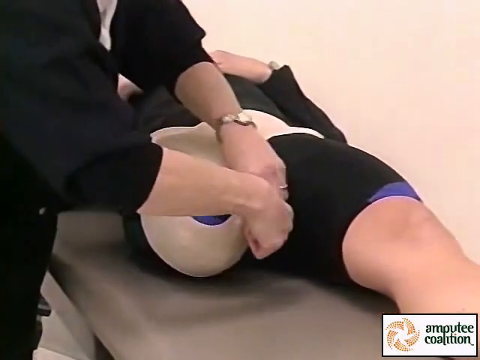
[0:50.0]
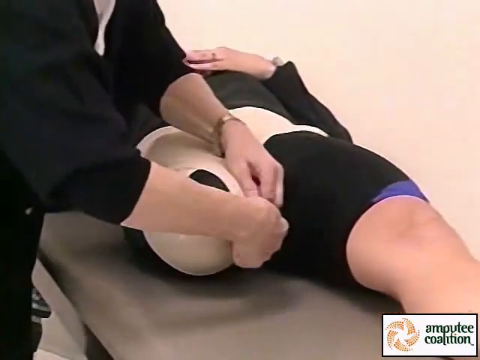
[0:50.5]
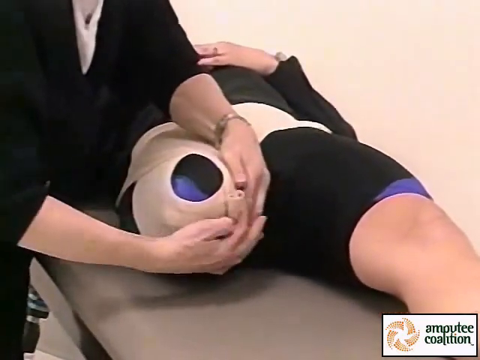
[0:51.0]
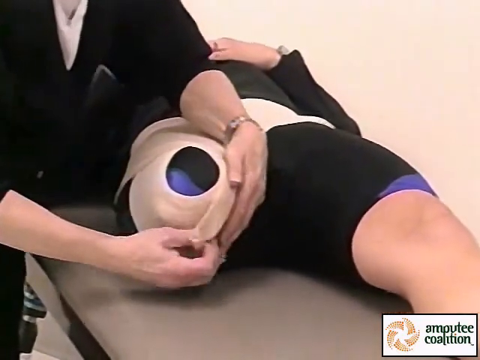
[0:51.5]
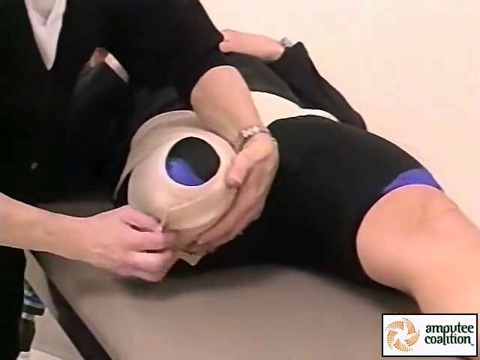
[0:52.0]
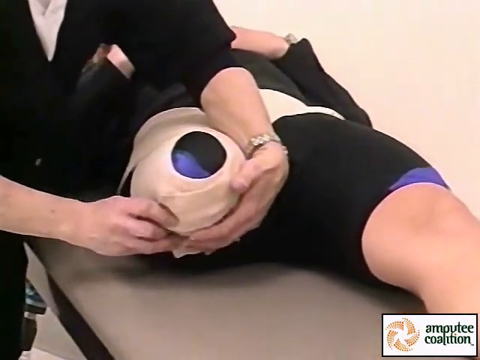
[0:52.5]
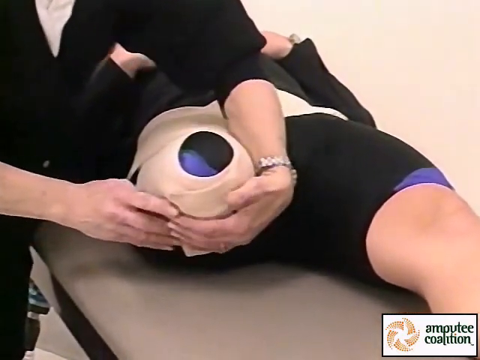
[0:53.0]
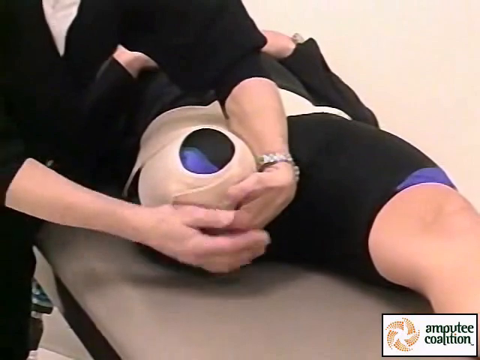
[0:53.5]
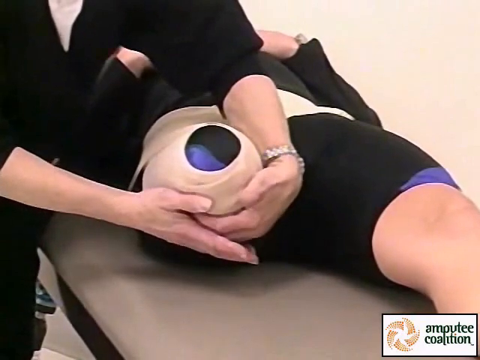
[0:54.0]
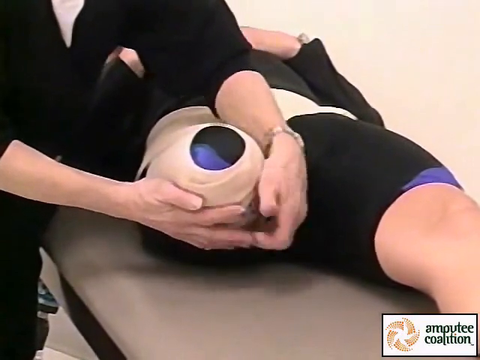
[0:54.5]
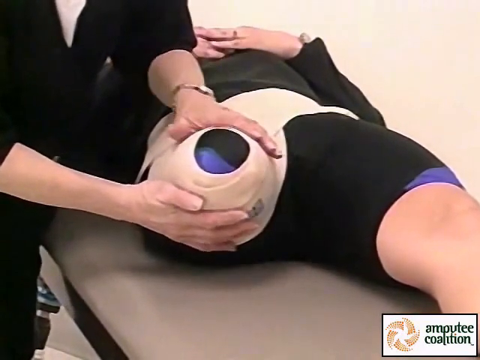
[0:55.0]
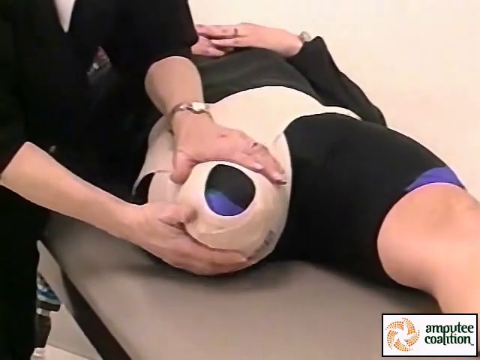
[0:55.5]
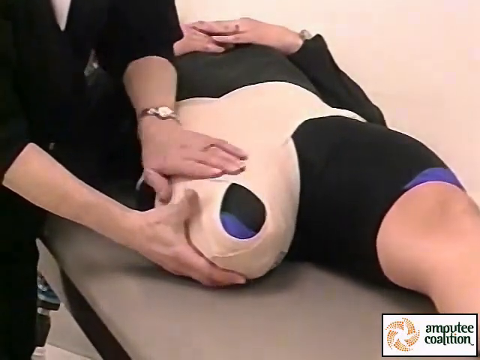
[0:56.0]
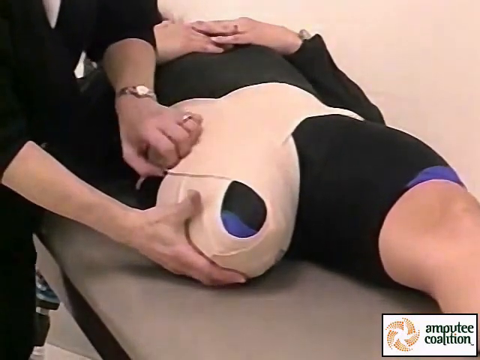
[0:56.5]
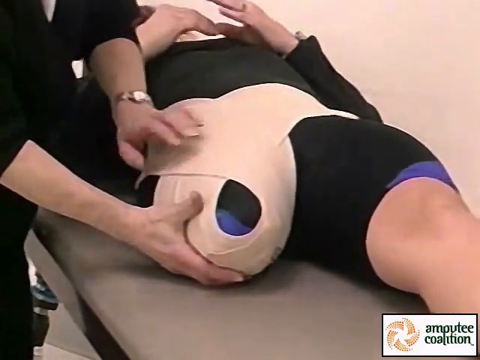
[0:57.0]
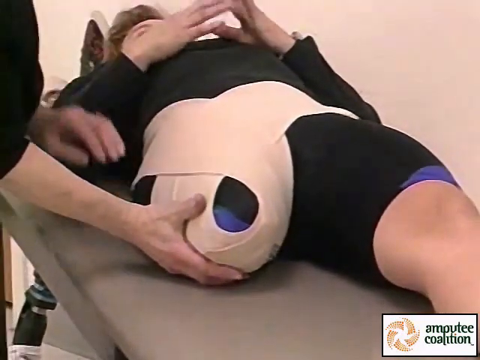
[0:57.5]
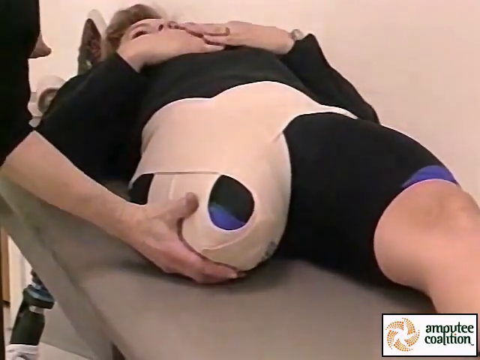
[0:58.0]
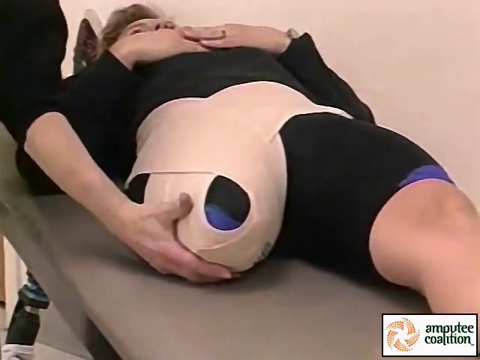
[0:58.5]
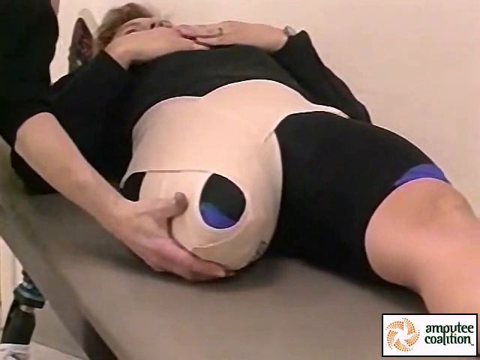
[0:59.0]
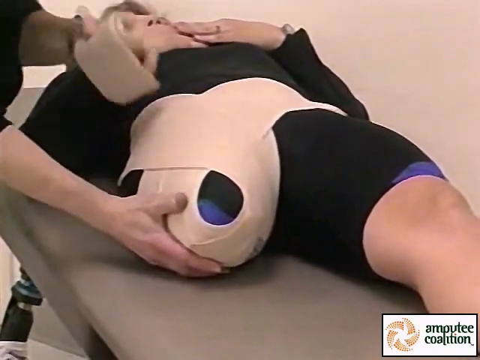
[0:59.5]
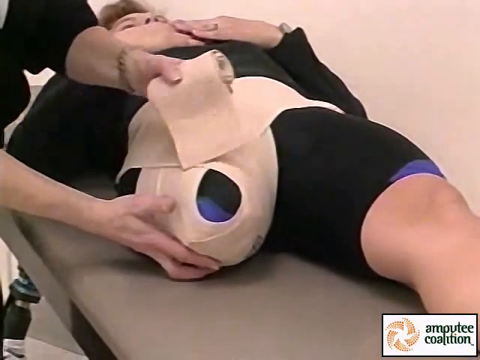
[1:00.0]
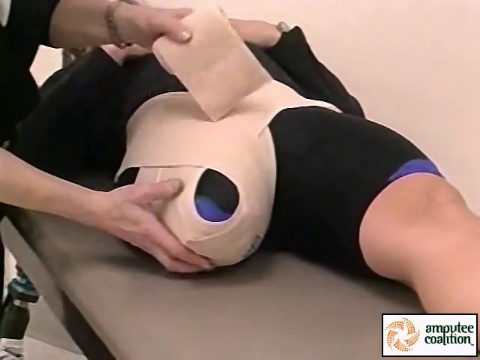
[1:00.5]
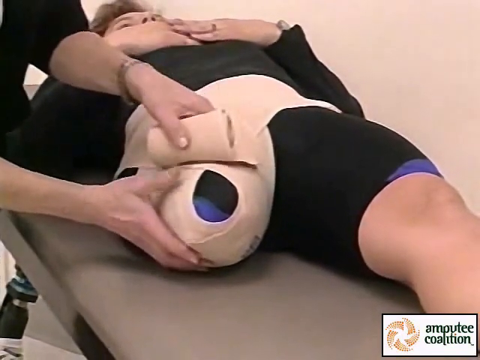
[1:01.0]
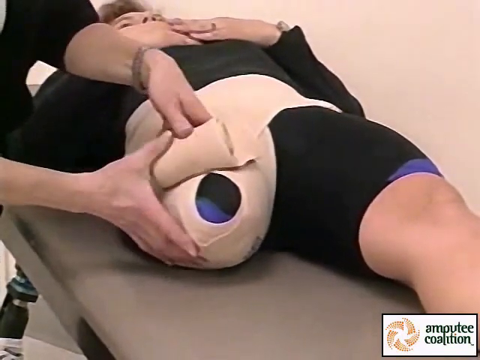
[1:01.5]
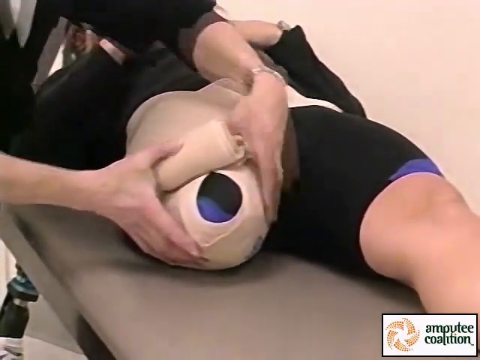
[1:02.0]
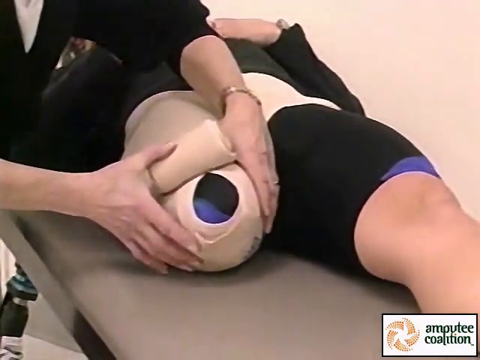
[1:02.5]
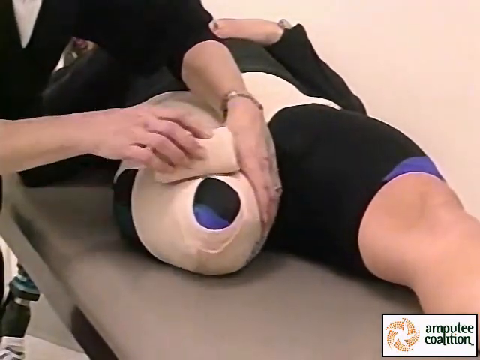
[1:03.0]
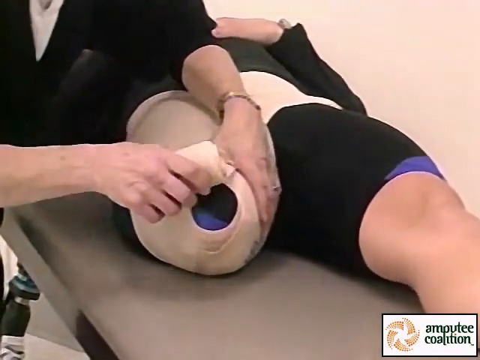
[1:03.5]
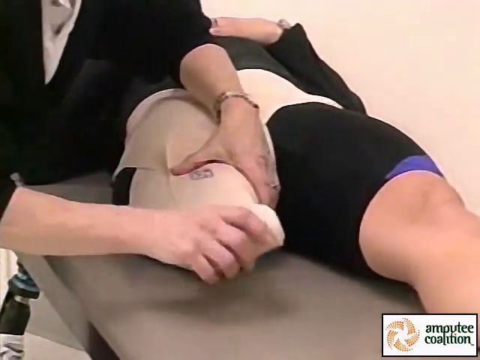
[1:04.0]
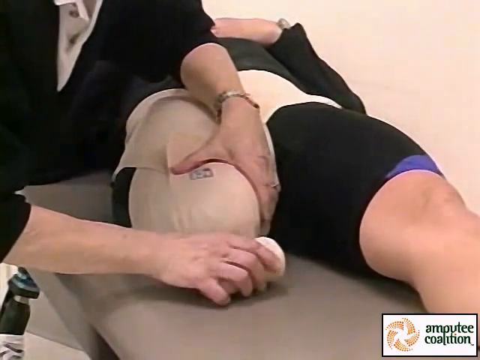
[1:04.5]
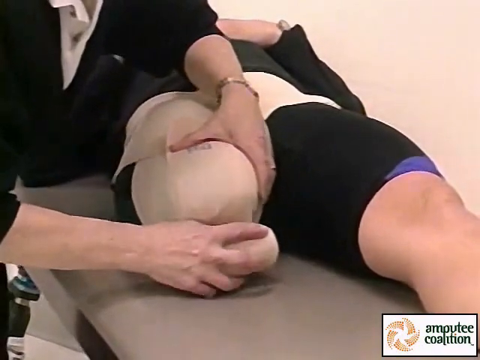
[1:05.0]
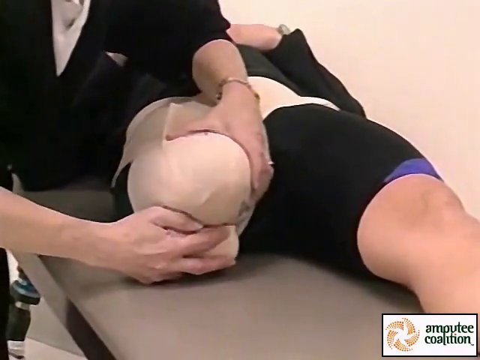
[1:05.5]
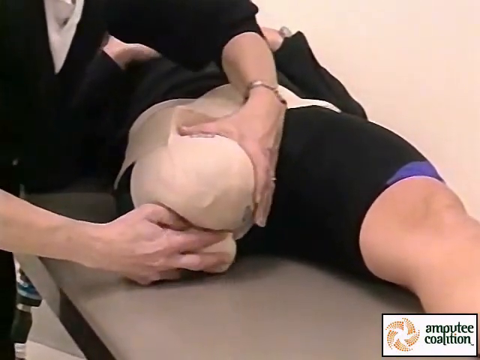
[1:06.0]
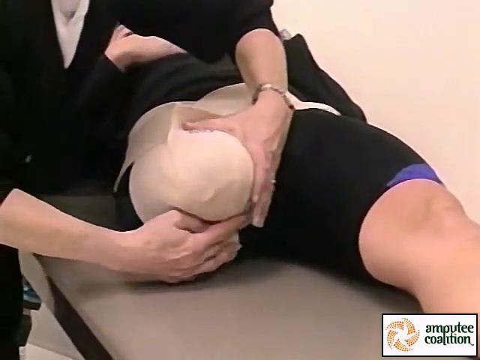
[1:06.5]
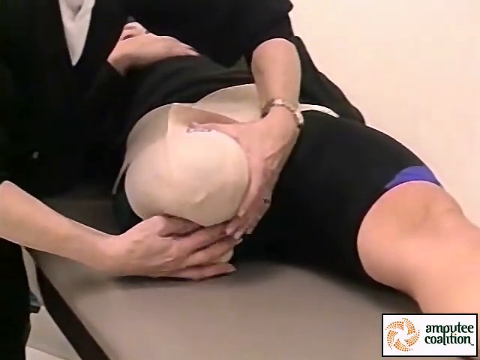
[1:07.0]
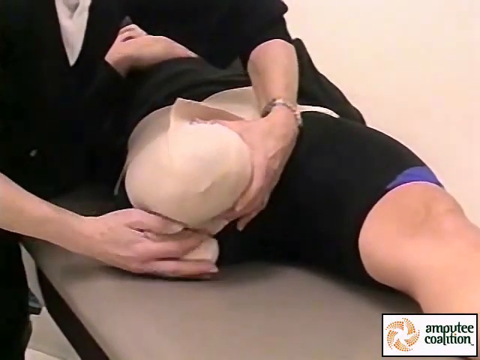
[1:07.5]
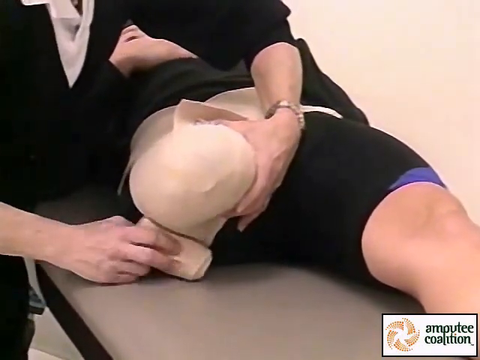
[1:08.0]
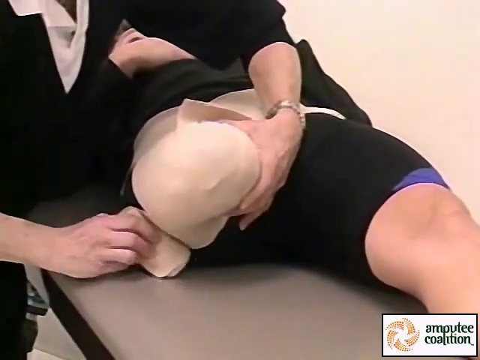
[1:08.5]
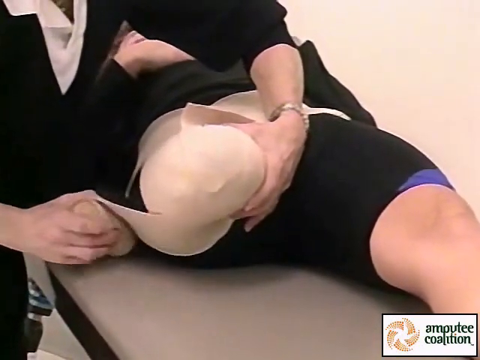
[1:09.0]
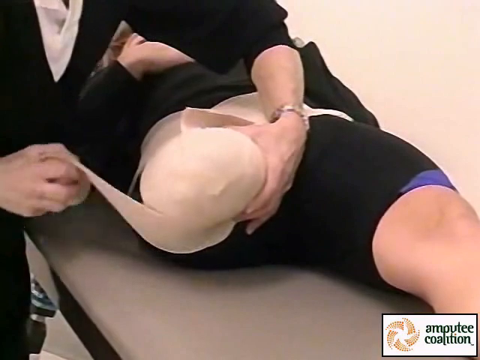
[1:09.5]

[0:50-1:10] Someone lies on their back on a mat, wearing a long-sleeved black shirt and tight spandex shorts with purple at the tips. They have only a left leg and no right leg. An ace bandage is wrapped around their waist and around the stub of the right leg. A person standing on the left side of the bed wears black pants and a long-sleeved black shirt rolled up to her elbows, with a white shirt underneath. She holds up the right stub where the leg is supposed to be, then grabs another tan bandage and starts wrapping it around the stub. She holds the stub up and wraps the bandage underneath it, back to the front, and underneath again.